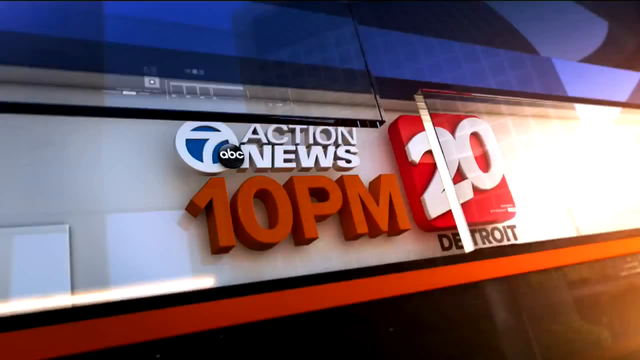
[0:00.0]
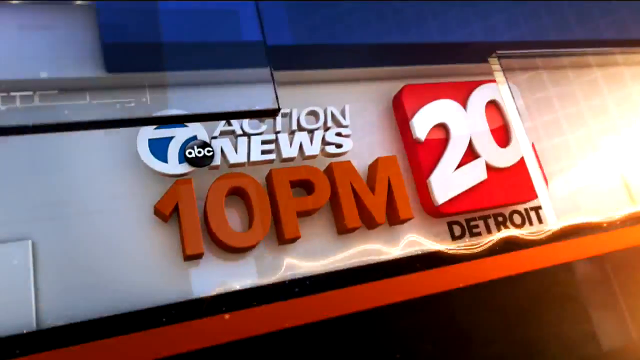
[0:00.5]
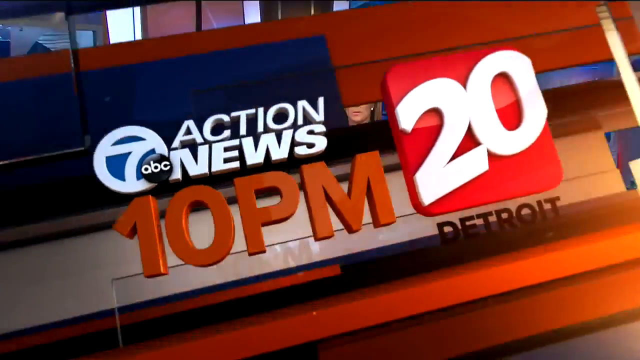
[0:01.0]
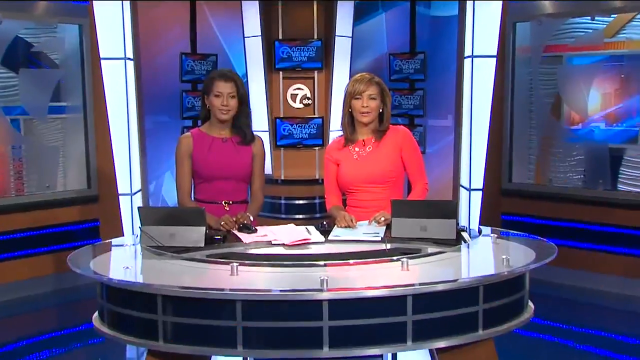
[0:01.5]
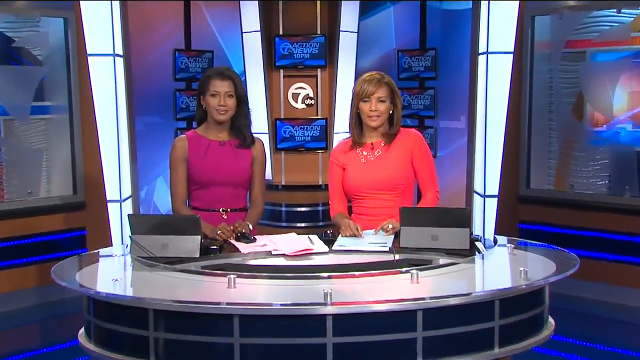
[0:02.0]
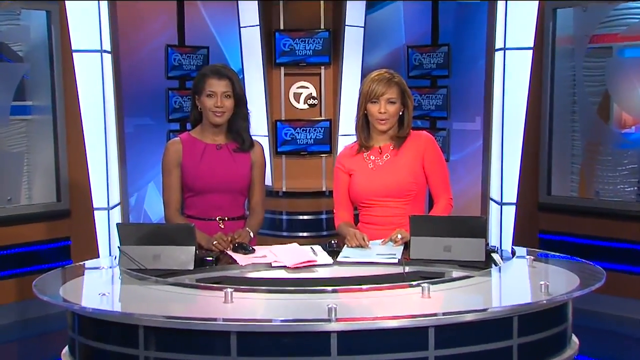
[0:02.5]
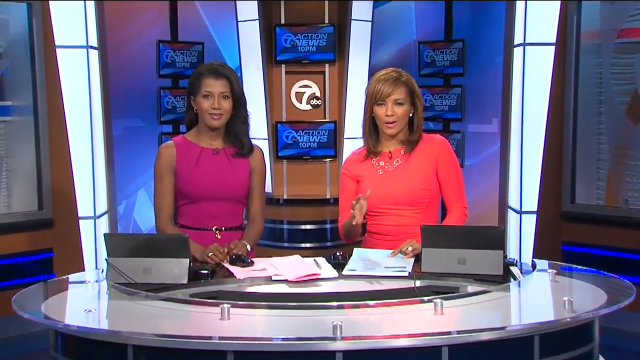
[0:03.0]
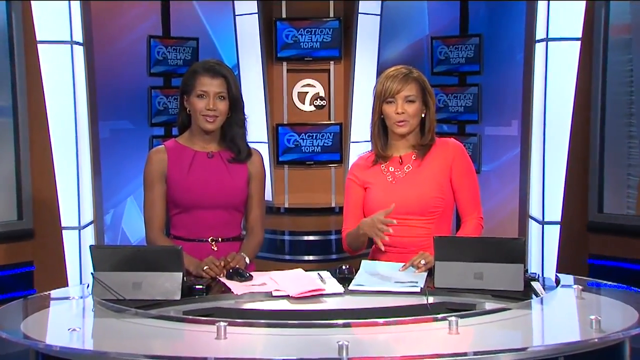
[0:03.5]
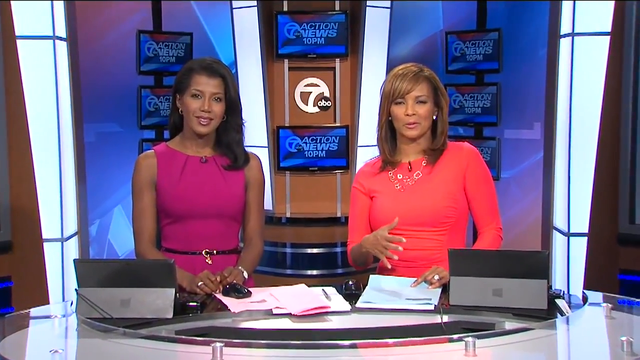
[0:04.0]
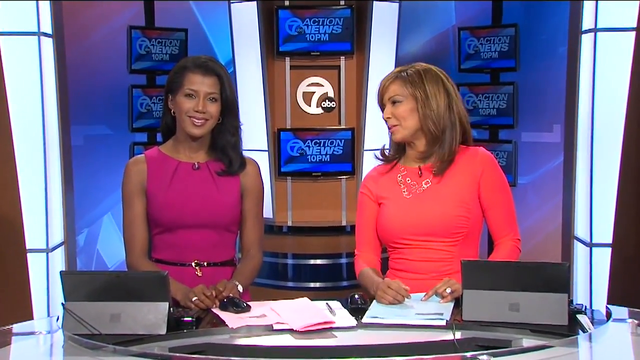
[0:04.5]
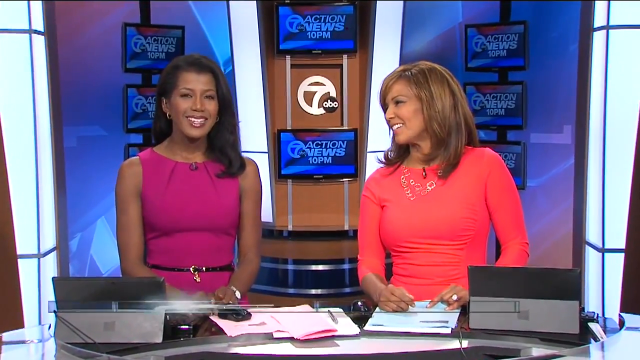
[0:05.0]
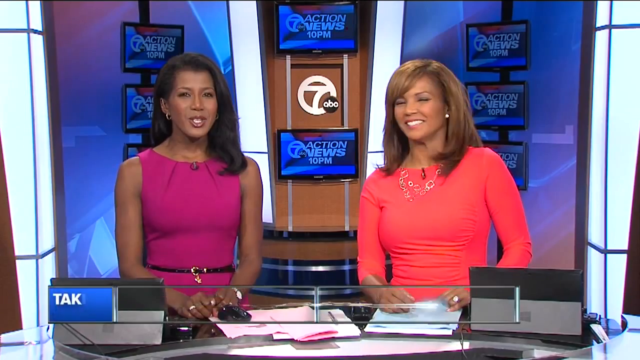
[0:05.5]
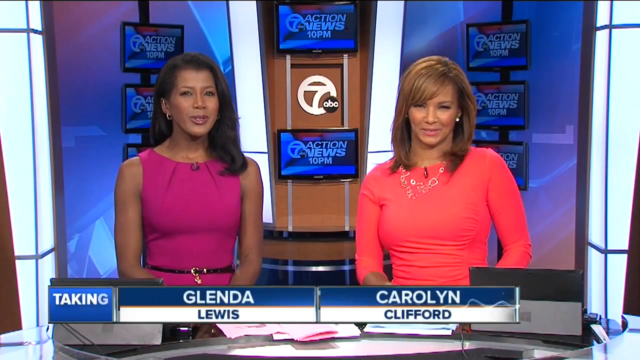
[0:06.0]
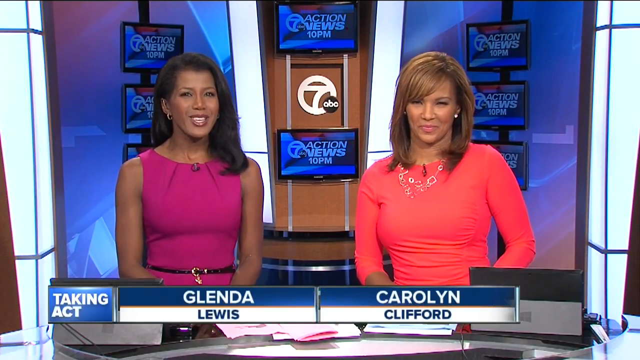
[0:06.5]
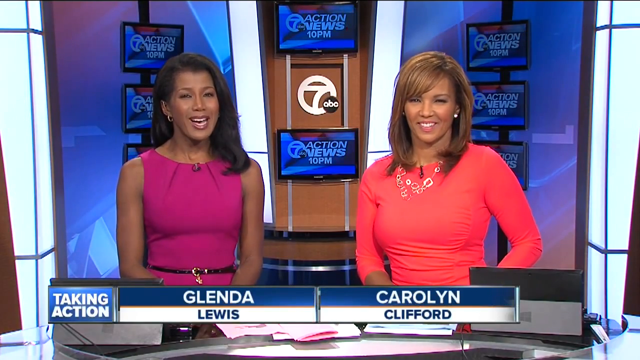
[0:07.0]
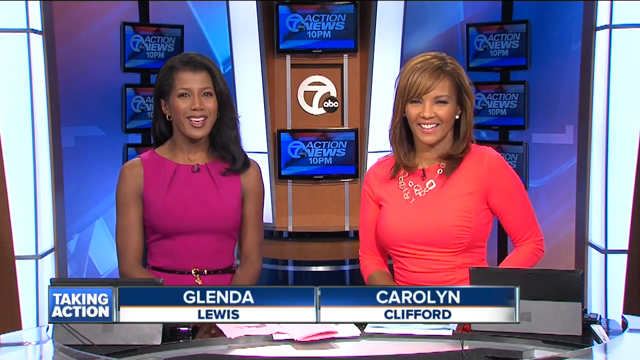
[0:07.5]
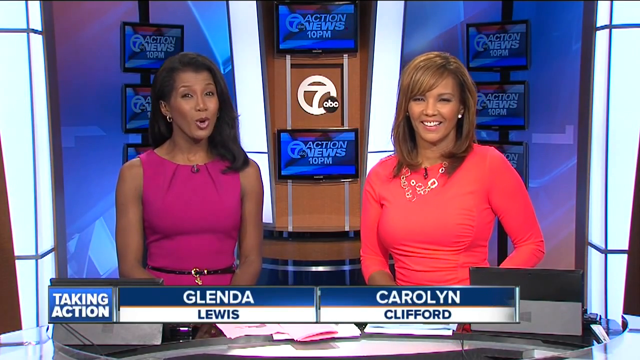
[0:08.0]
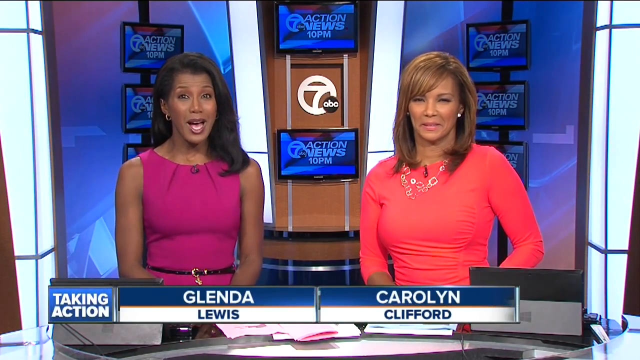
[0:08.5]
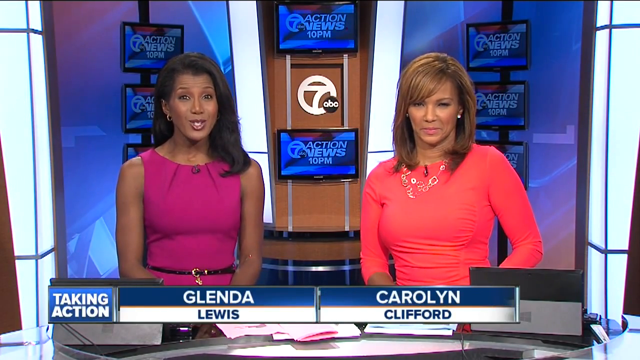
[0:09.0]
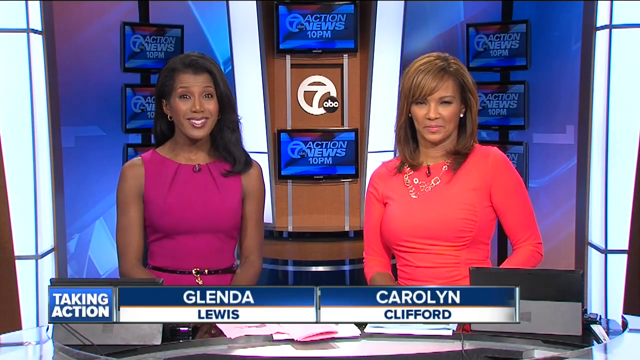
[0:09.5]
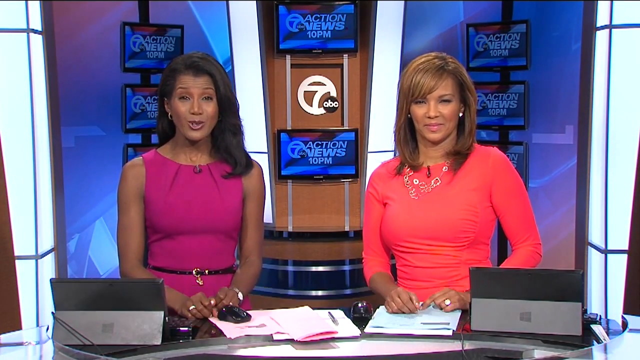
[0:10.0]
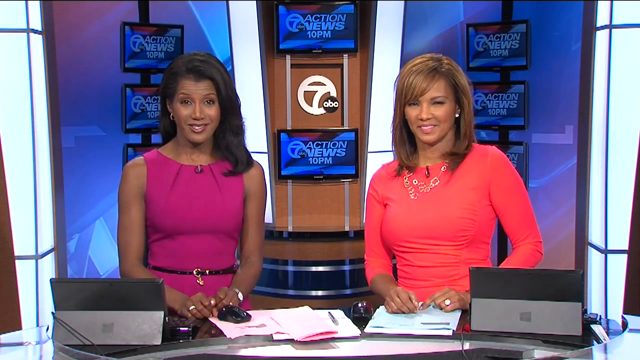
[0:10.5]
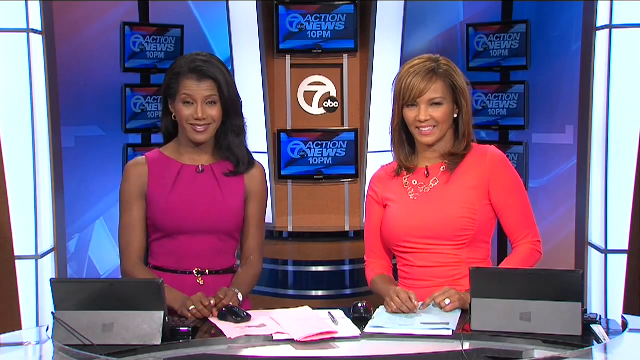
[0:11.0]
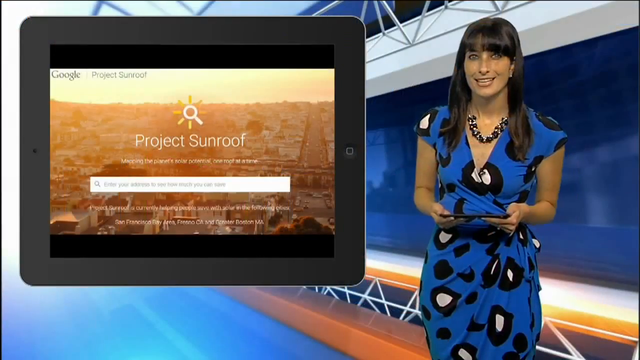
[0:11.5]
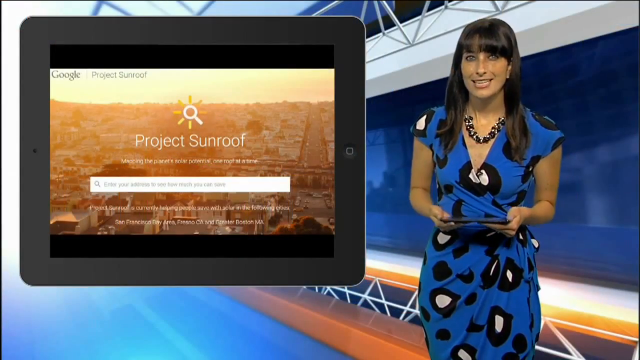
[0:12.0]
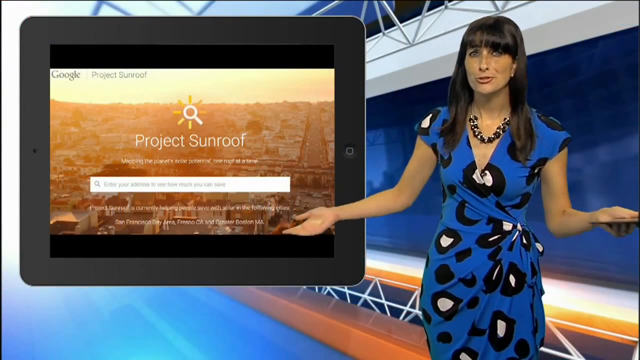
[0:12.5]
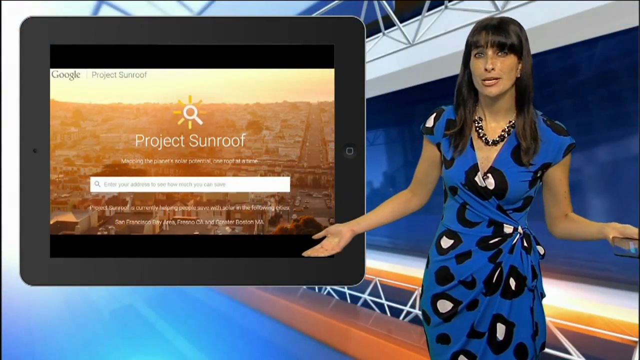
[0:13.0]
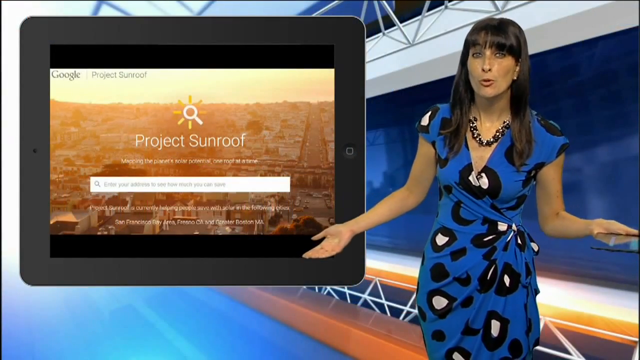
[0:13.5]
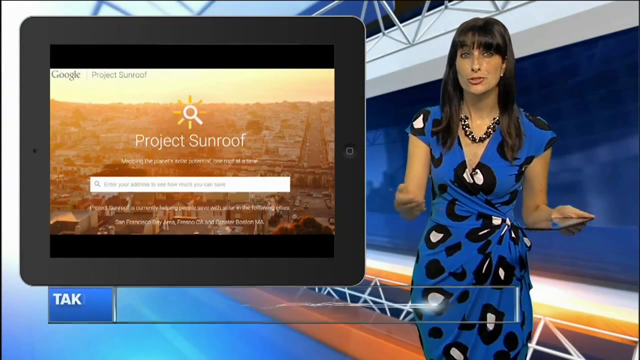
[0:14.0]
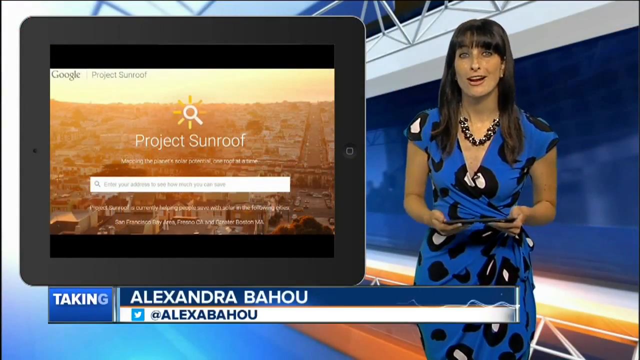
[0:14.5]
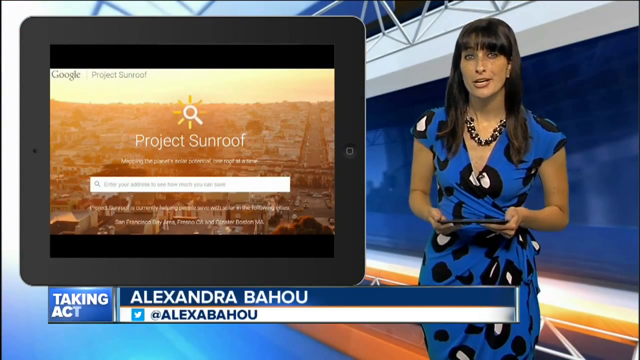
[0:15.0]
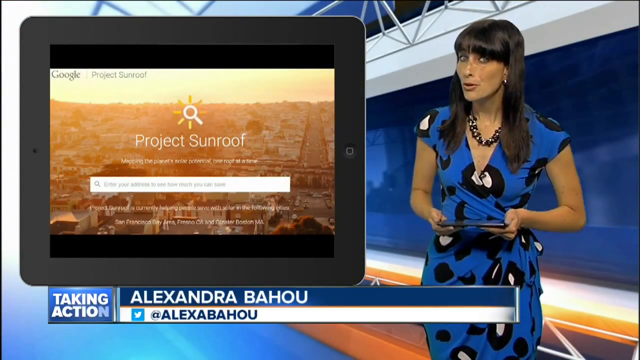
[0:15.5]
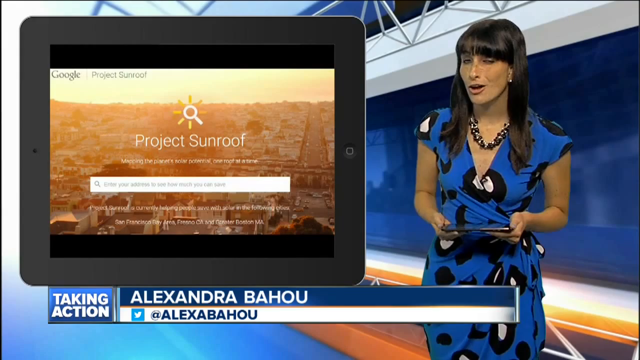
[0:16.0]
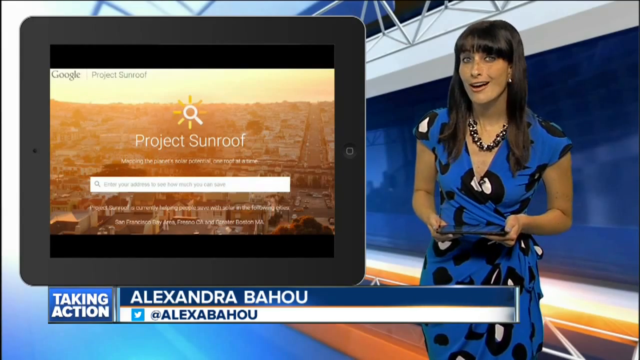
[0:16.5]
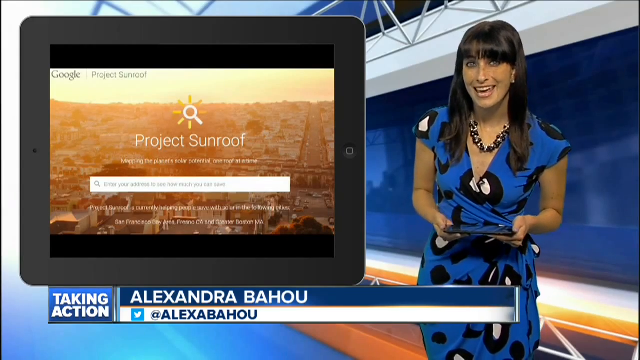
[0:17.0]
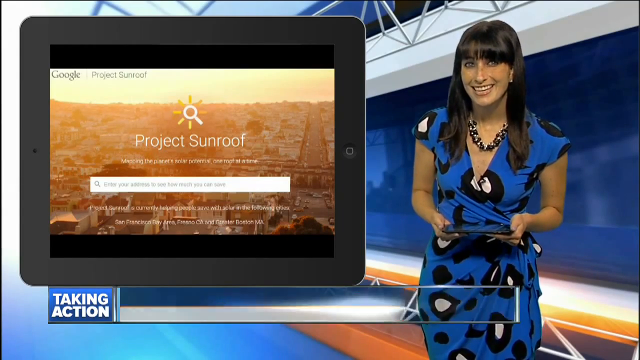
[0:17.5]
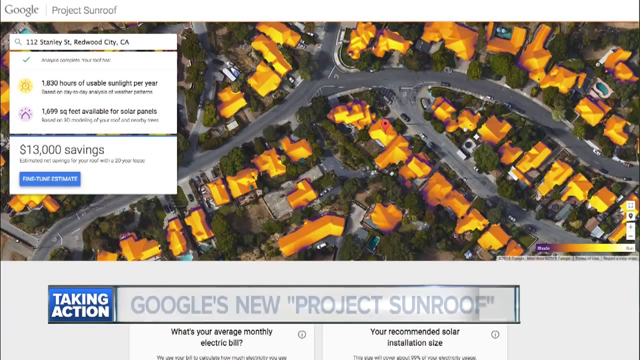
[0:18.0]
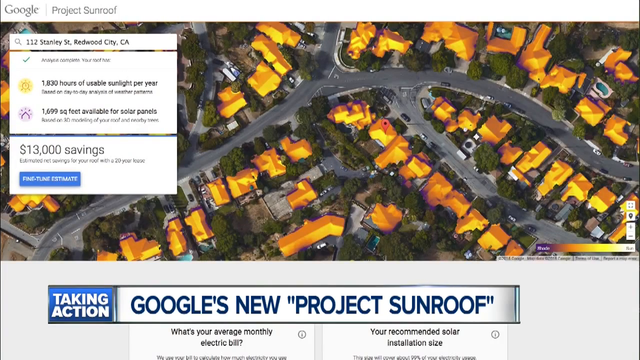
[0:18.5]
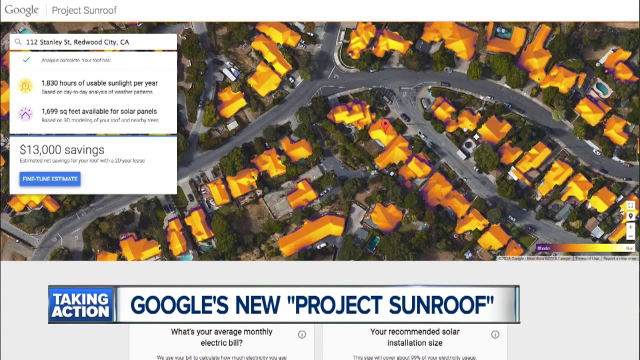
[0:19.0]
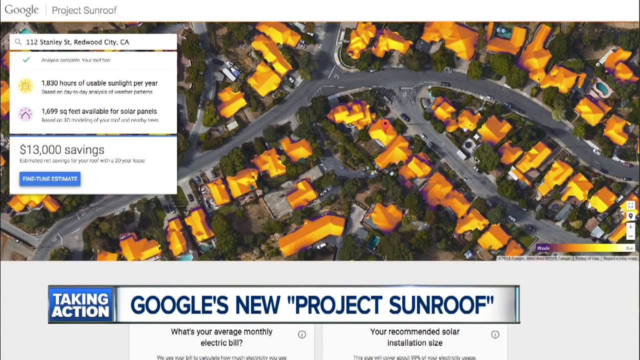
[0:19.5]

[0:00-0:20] The video is from the ABC News Channel and opens on two women with their hands on a desk. The woman on the right wears a purple dress with a thin black belt that has gold in the middle. She looks to be of mixed African American, Caucasian and Asian ethnicity, has symmetrical features, and her dark, straightened hair falls just past her shoulders. The woman on the left wears a long-sleeved pink shirt that looks like it is made of spandex, and a gold necklace that appears to have different shapes on it. Her short, light reddish-brown hair is straightened and stops just above her shoulders, and her bangs are swept to the side. She turns to the woman on the right to say something, then gives a big smile and looks directly at the camera. The woman on the right continues talking, nodding her head up and down. The shot switches to a woman standing on the left of the screen. She wears a blue dress with big black and white spots that look almost abstract, and a thick necklace. Her hair looks naturally straight, is thin, and falls just a little past her shoulders, with bangs cut straight across above her eyebrows. She looks to be in her early to mid 20s, has a slight tan, and appears to be Caucasian. To her right, a black tablet takes up most of the screen, with "Project Sunroof" in the middle of it. As she speaks she opens both hands and moves them out toward her sides; she is holding something that looks like a tablet, and she brings her hands back together to hold it around the edges. She keeps talking for another second, then the view changes to an overhead shot looking straight down on what appears to be a suburb, with many houses and cars parked outside most of them, resembling GPS imagery seen from above. On the right of the screen, text gives the number of hours of usable sunlight per year and a savings figure of "$13,000". The roofs of the houses are a yellowish gold. At the bottom of the screen, blue letters read "Google's new 'Project Sunroof'", with Project Sunroof in quotation marks.